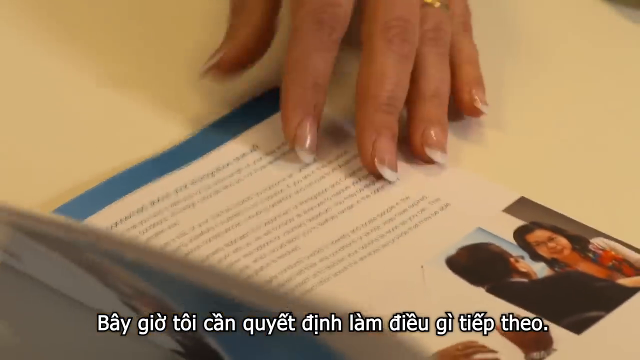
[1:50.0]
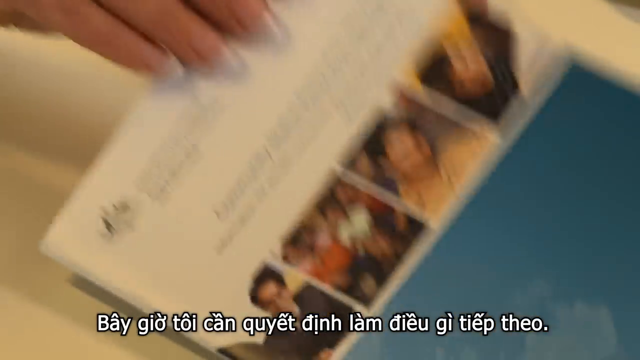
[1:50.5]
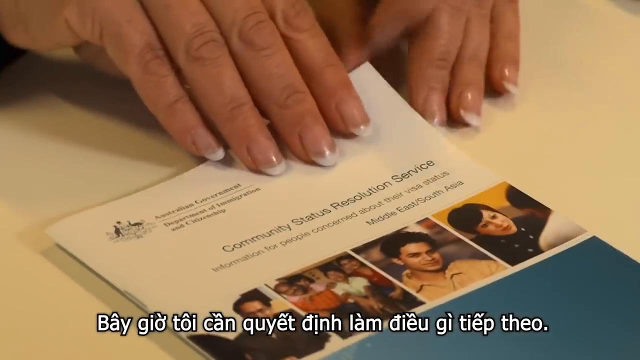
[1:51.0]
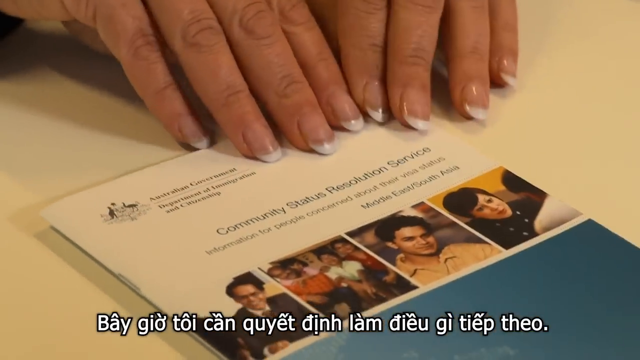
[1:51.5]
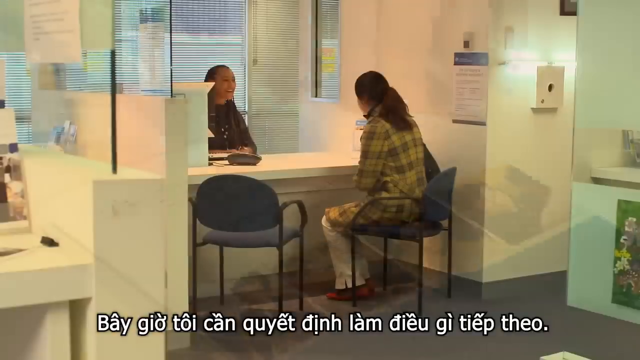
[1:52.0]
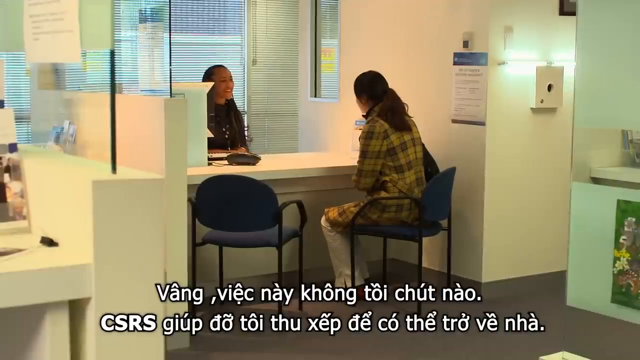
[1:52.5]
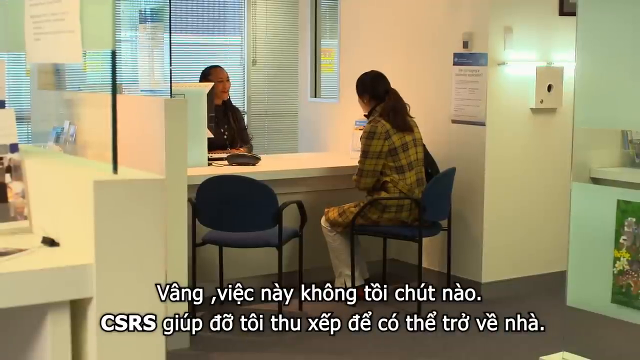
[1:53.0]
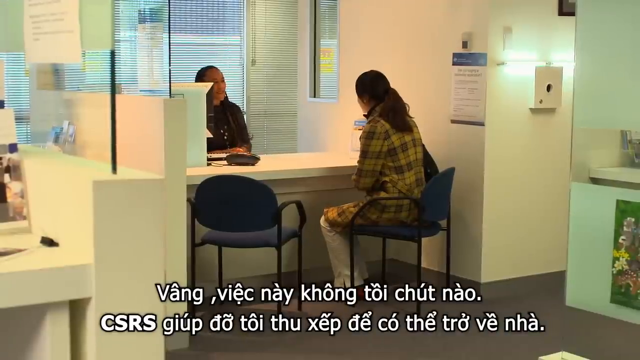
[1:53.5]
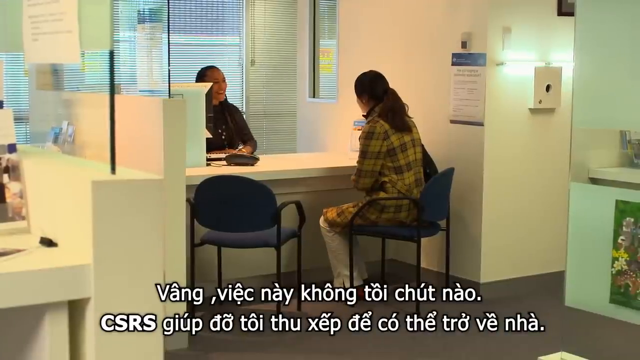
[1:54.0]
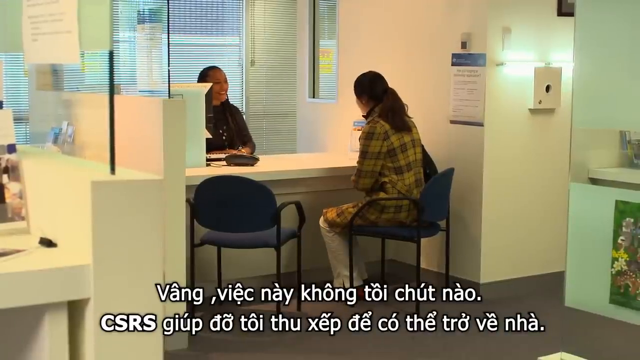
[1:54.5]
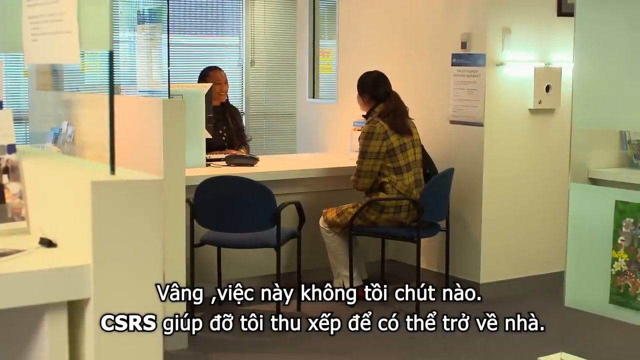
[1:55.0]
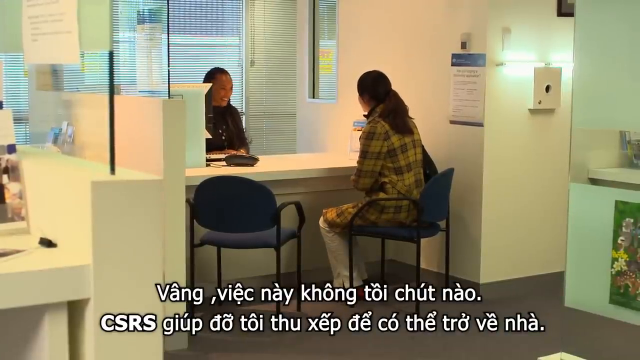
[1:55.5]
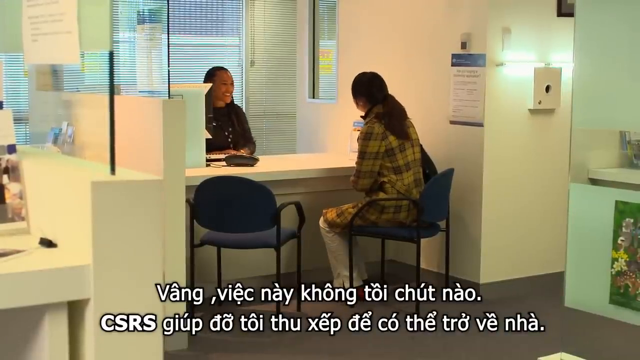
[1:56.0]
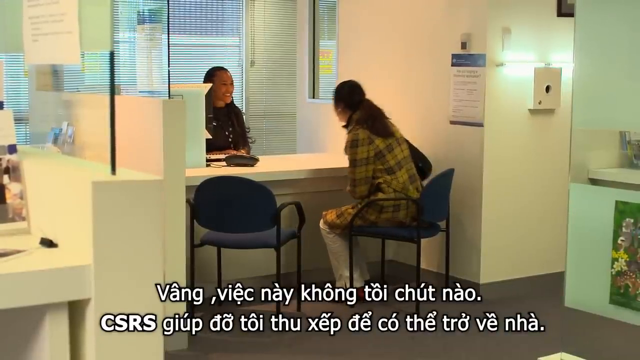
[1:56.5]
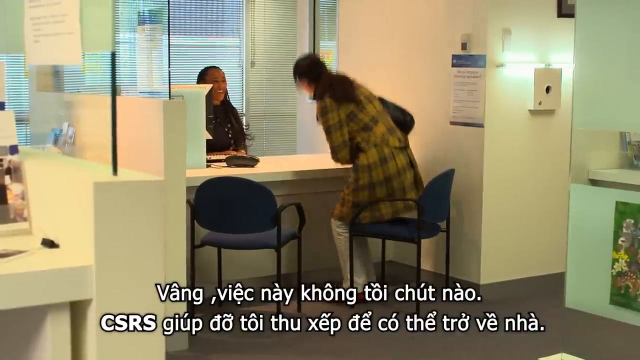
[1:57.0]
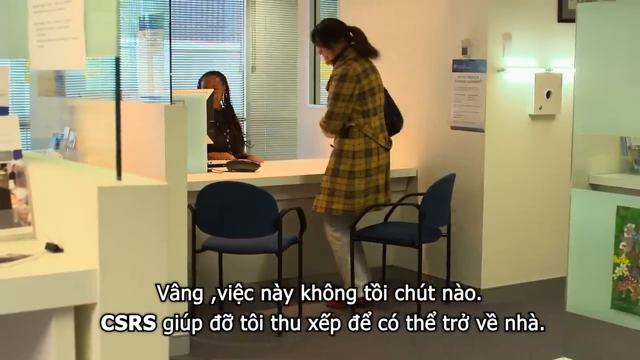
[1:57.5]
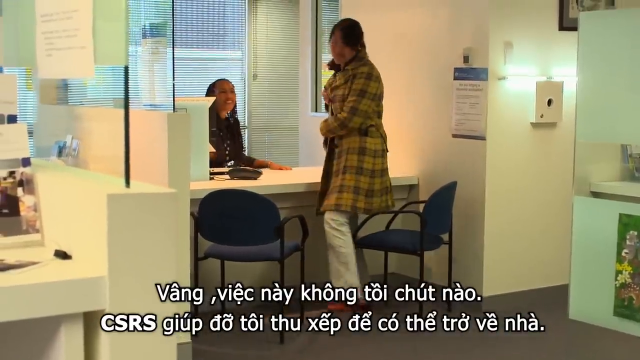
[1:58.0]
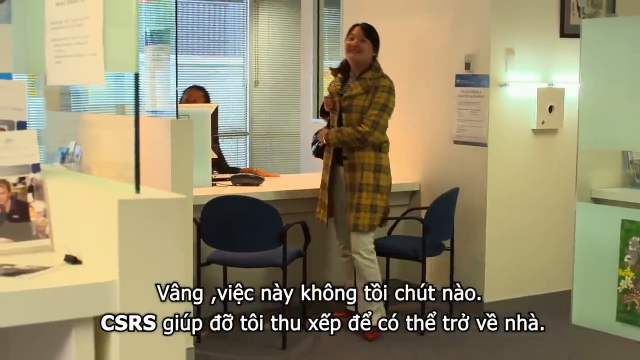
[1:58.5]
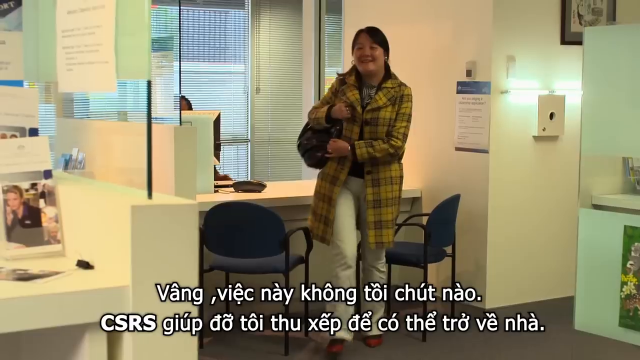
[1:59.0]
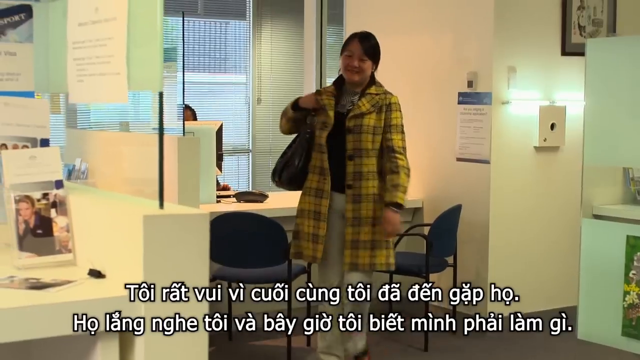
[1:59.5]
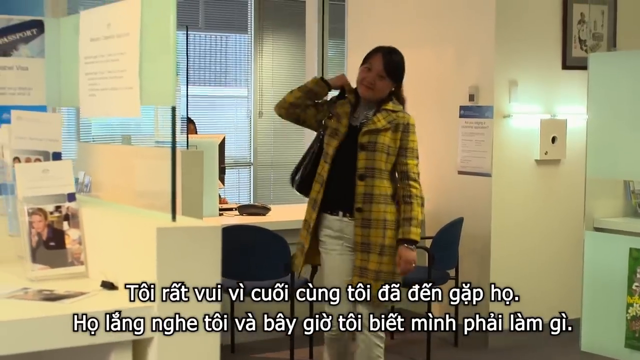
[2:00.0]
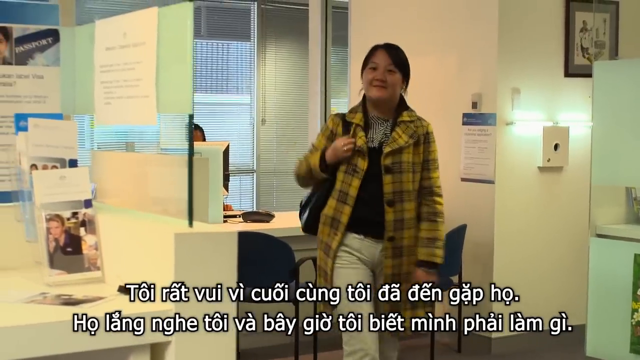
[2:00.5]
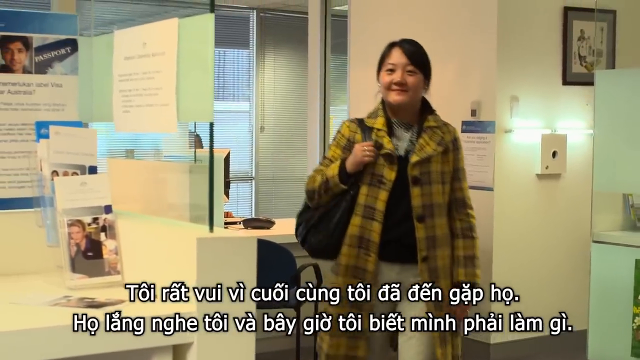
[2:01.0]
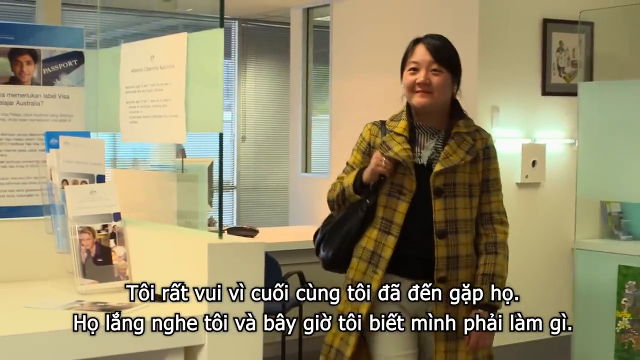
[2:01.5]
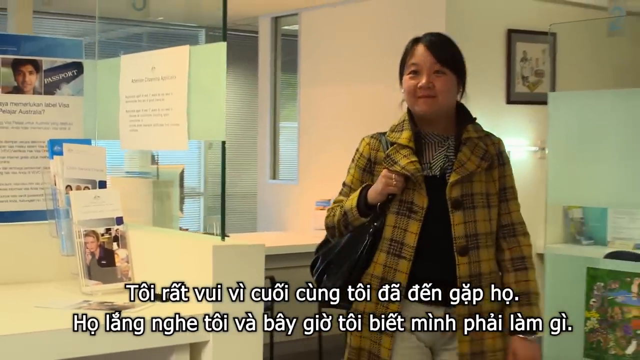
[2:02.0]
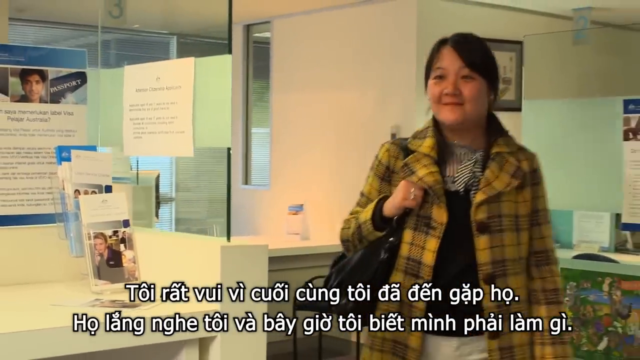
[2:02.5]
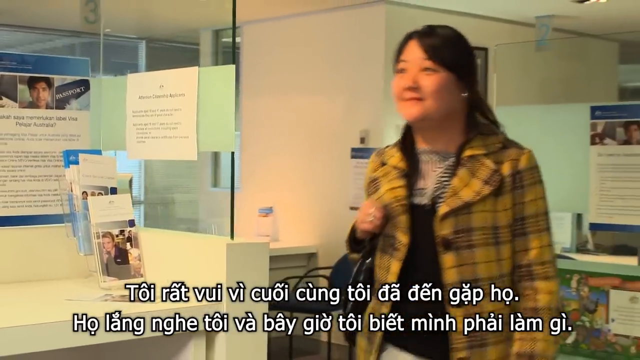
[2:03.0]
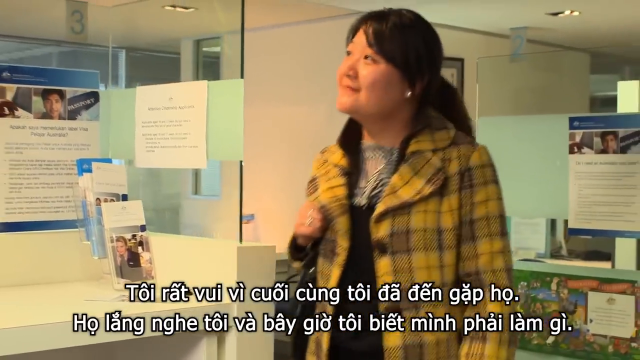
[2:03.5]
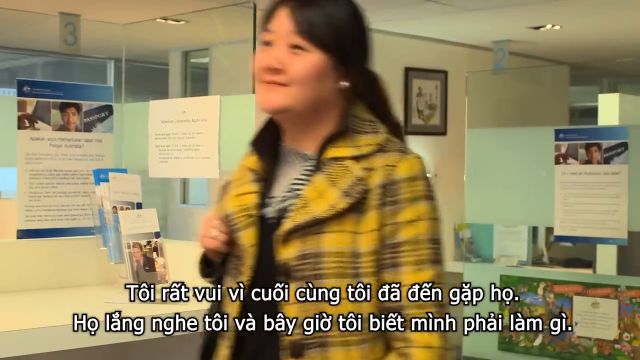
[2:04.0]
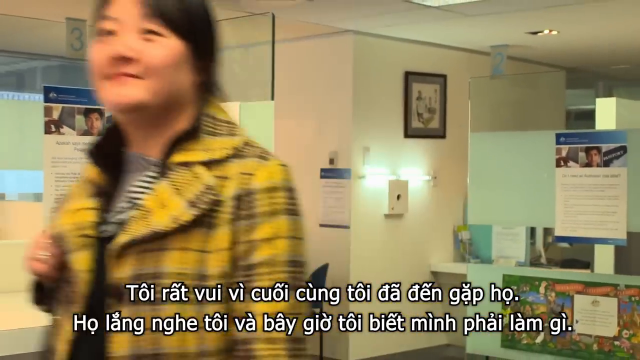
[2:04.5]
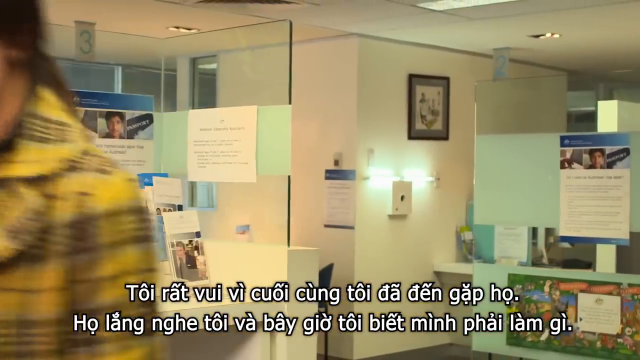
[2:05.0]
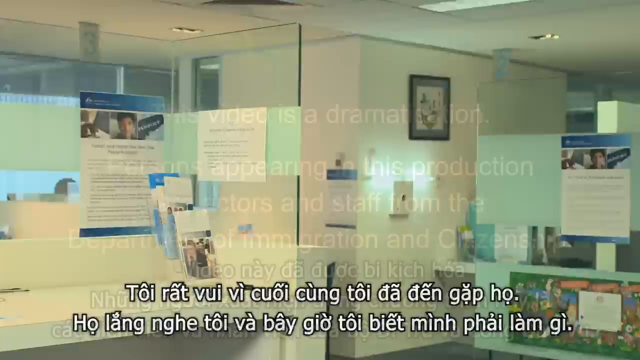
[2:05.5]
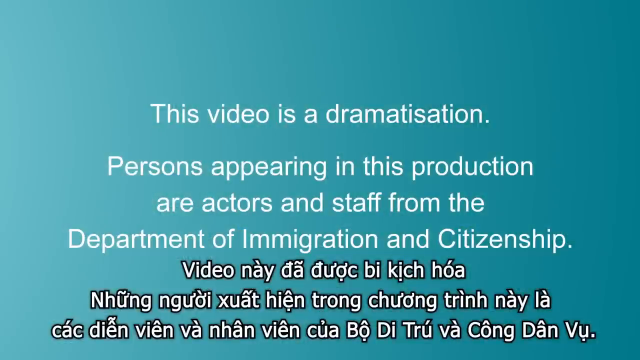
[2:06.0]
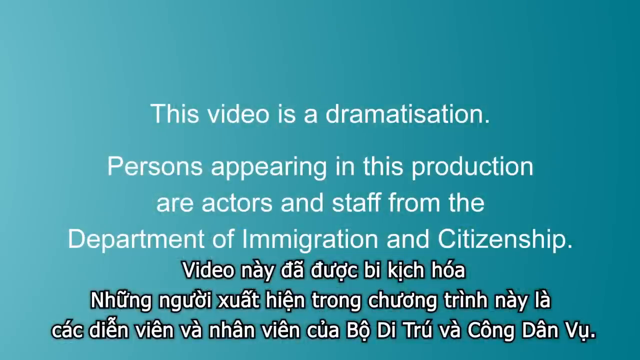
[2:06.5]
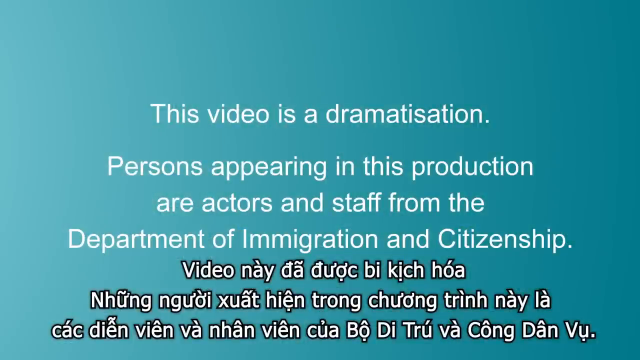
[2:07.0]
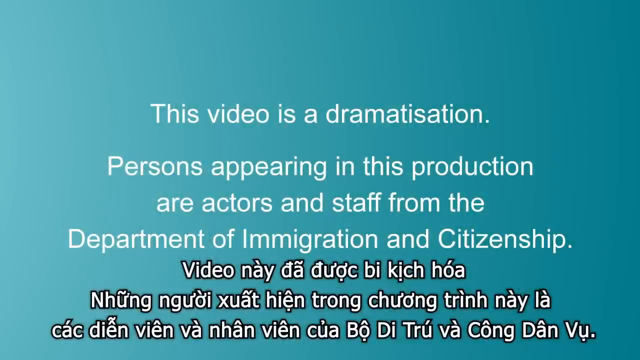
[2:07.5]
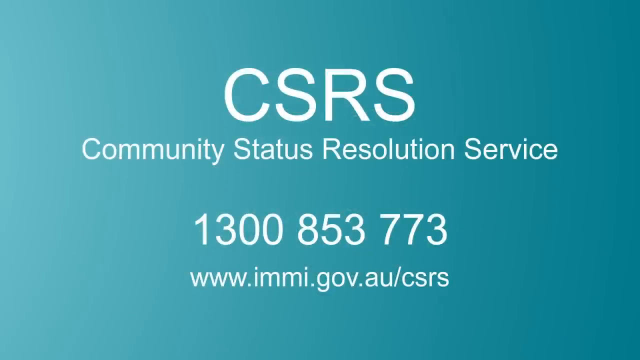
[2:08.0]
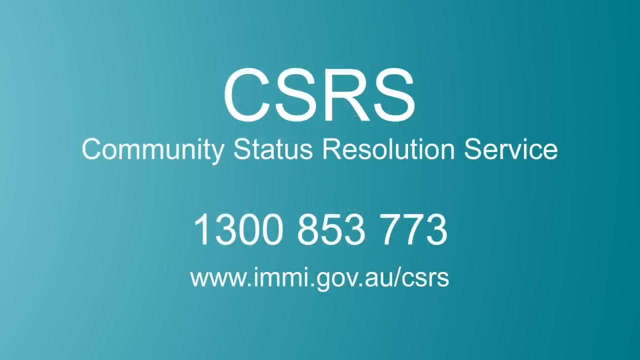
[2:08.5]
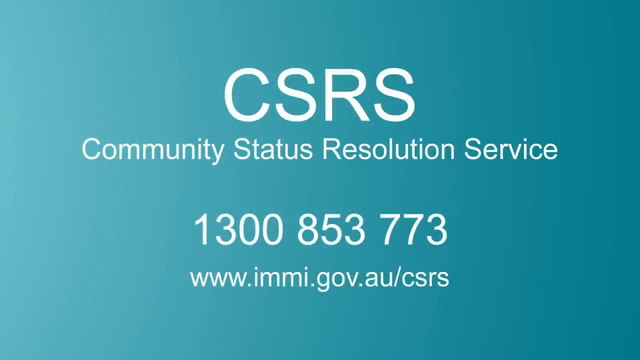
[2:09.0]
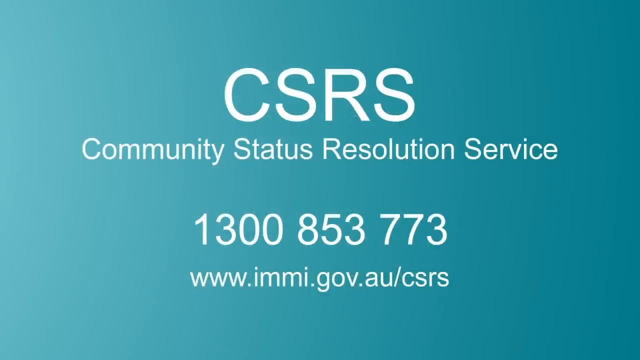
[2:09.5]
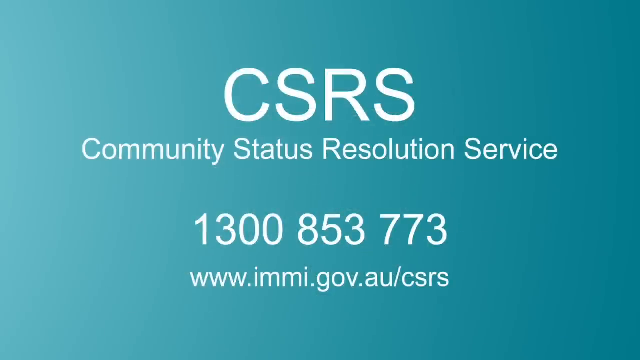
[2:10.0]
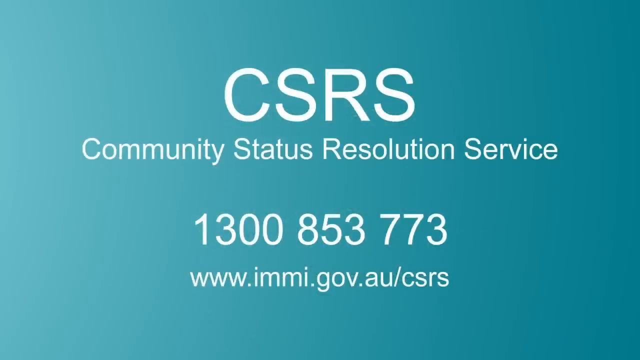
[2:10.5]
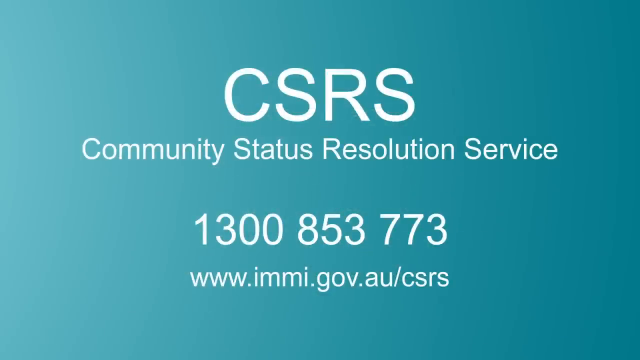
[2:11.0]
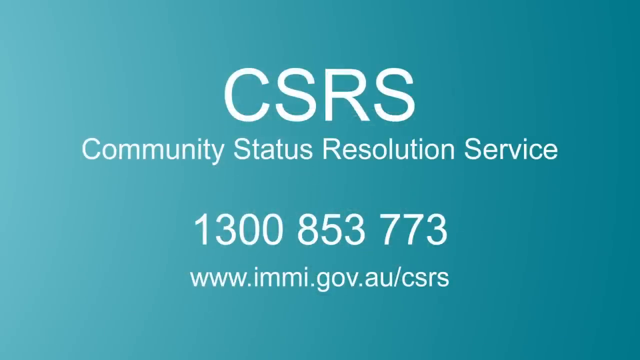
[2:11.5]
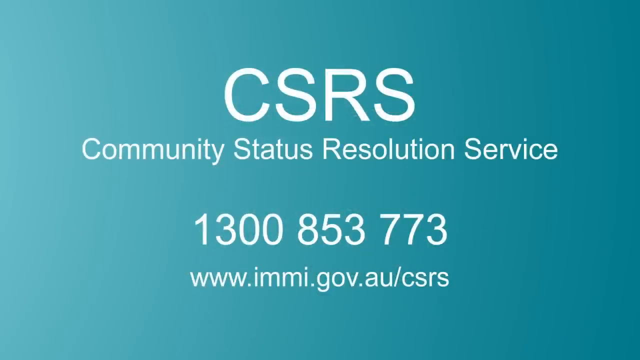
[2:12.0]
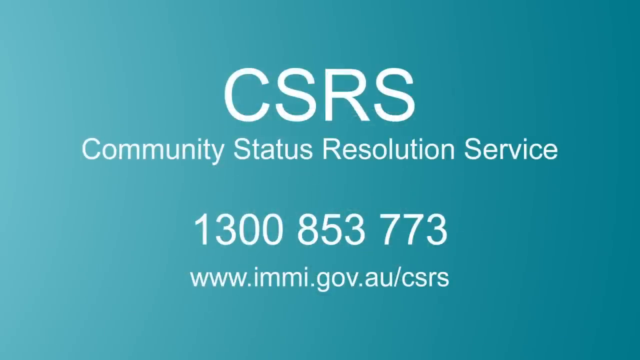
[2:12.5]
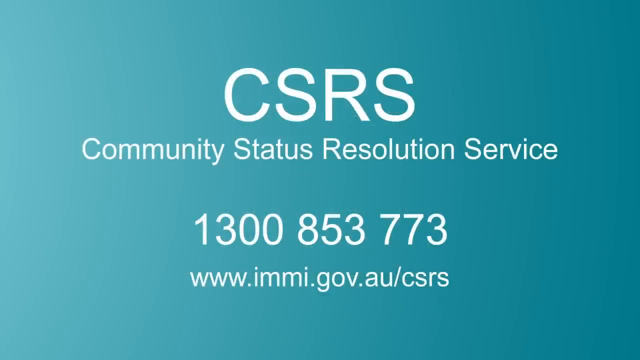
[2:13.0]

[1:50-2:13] The brochure has a lot of writing: a blue border at the top, then white space, a couple of slightly bold headers and about four blocks of text. The receptionist's nails are done, clear, with a fair amount of white cuticle showing. At the bottom right of the brochure is a picture of an Asian man in a suit jacket, seen from behind, talking to an Asian woman with glasses. She closes the brochure, and the cover reads "community status resolution service", centered, with text starting "department of" at the top. It has some kind of emblem that looks like two birds, and underneath are a few more words about the Middle East and South Asia, along with four different pictures of people. Next, a woman sits in a chair talking across the desk to an Asian woman sitting at a computer. There are two chairs, and the visitor occupies the one on the right. She appears to wear white pants and has her hair back in a ponytail. The space looks almost like an open cubicle, with a tall wall on the right and a short wall on the left with a glass divider. She gets up and smiles; it is the Asian woman from earlier. She turns around, looks around, walks and turns to the left. Then white centered text on a blue background reads "this video is a dramatization".